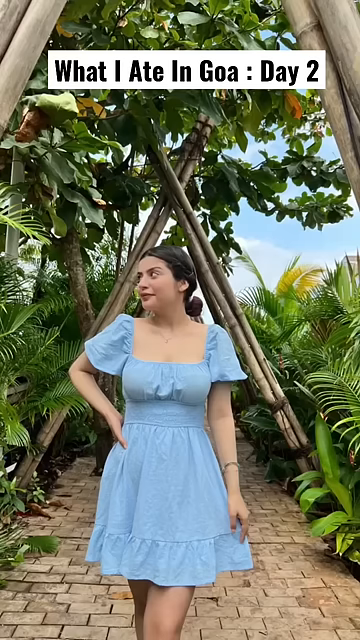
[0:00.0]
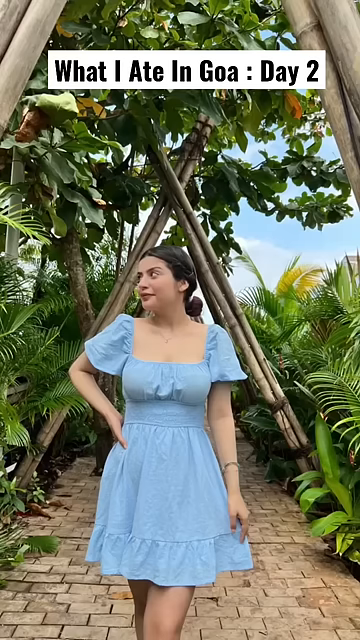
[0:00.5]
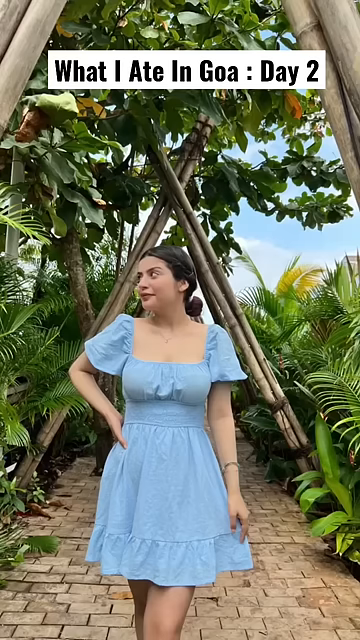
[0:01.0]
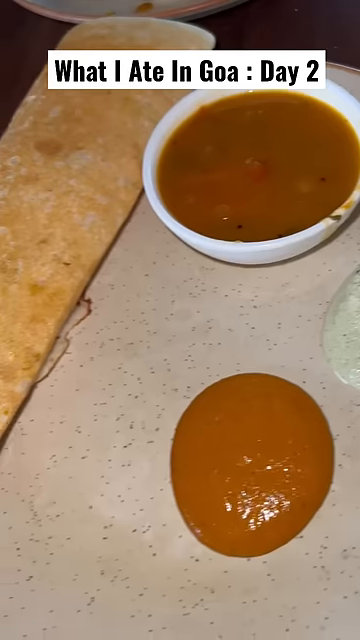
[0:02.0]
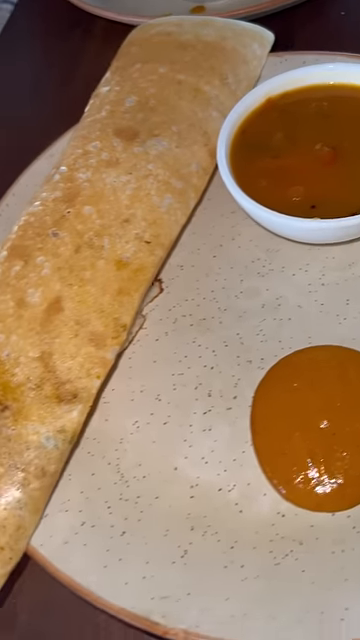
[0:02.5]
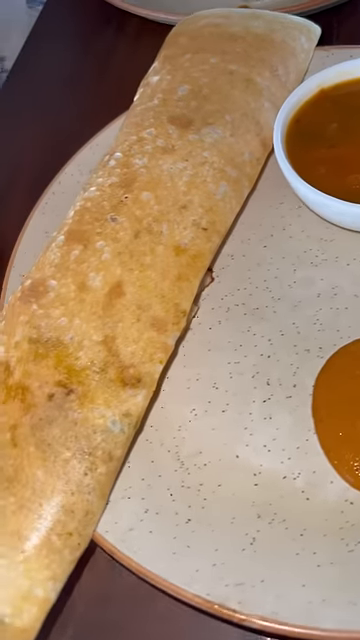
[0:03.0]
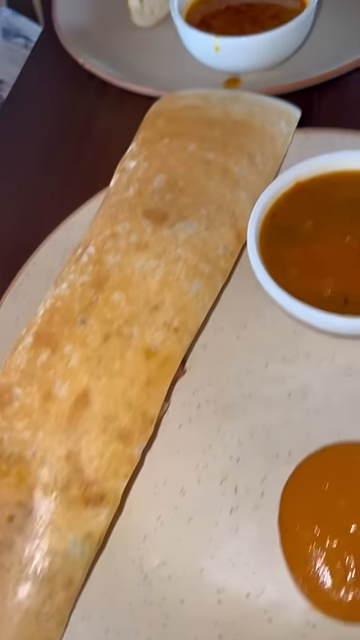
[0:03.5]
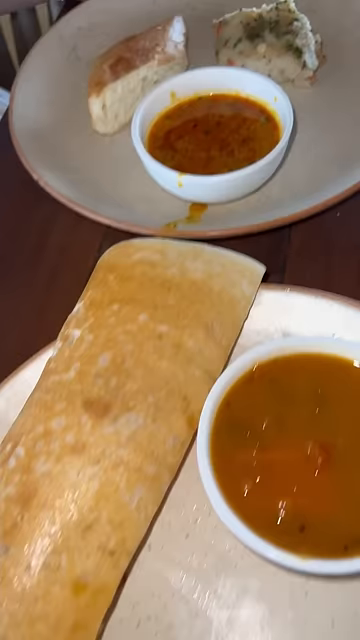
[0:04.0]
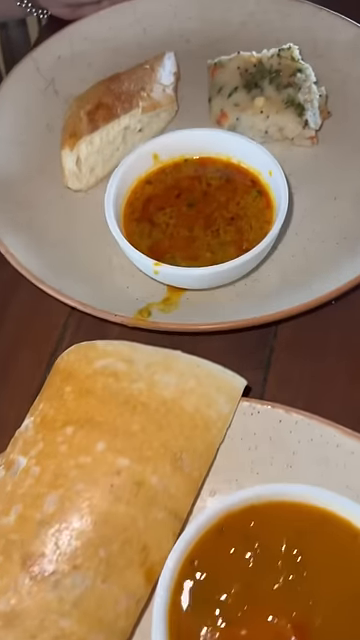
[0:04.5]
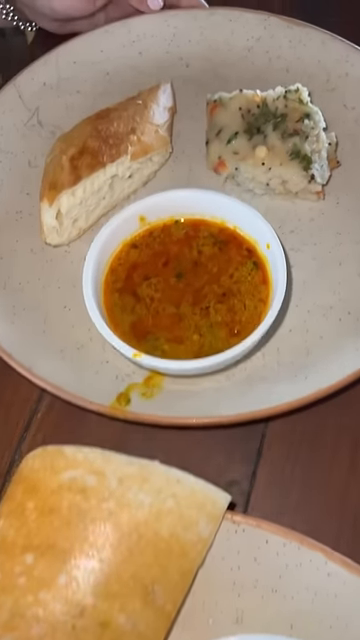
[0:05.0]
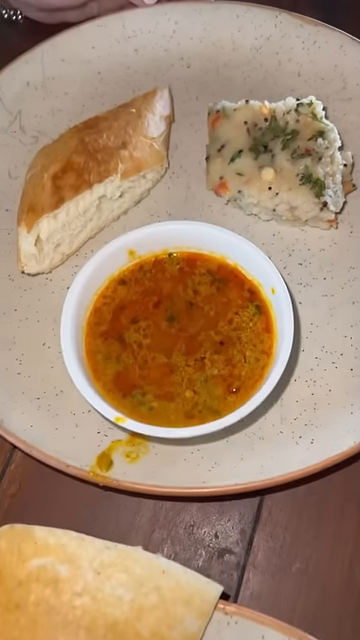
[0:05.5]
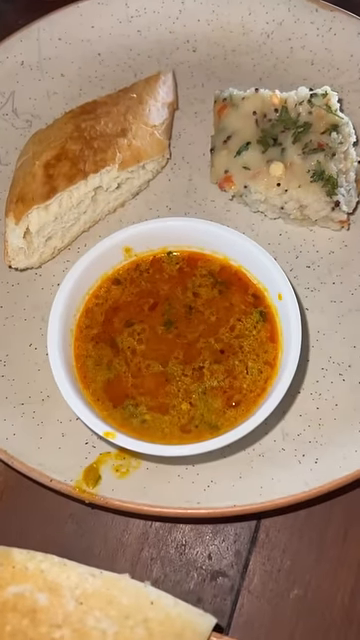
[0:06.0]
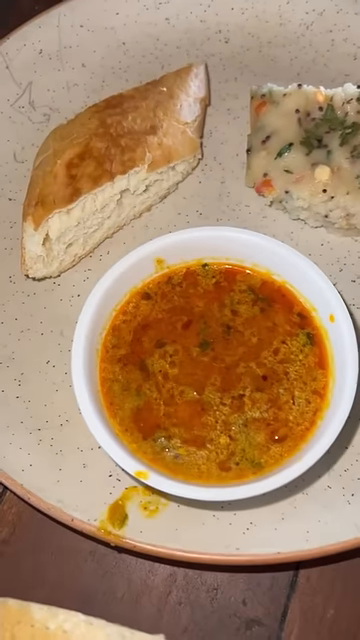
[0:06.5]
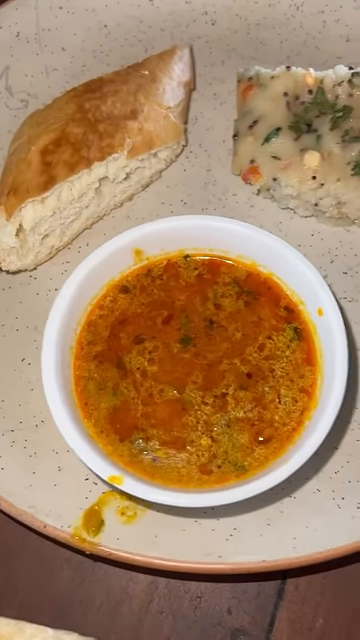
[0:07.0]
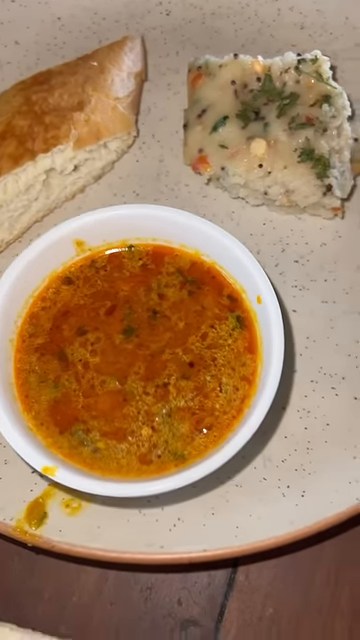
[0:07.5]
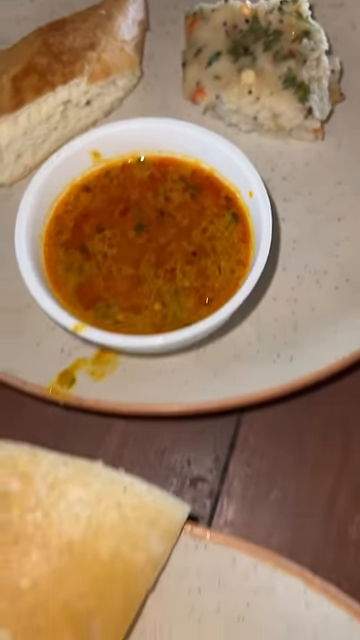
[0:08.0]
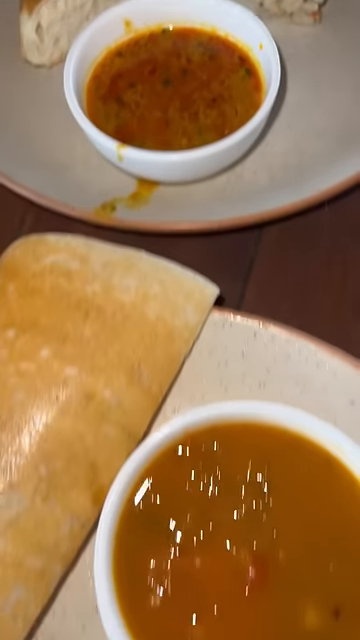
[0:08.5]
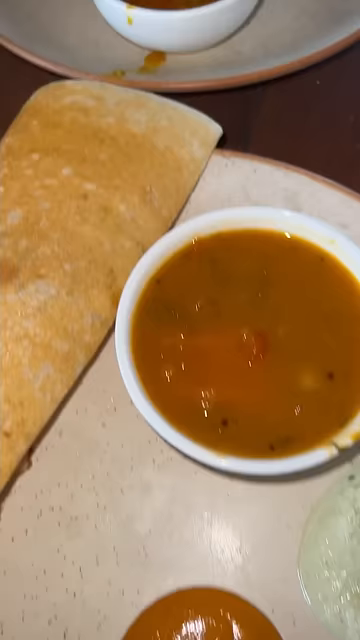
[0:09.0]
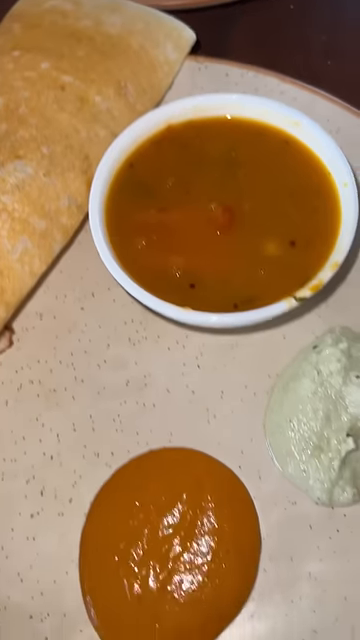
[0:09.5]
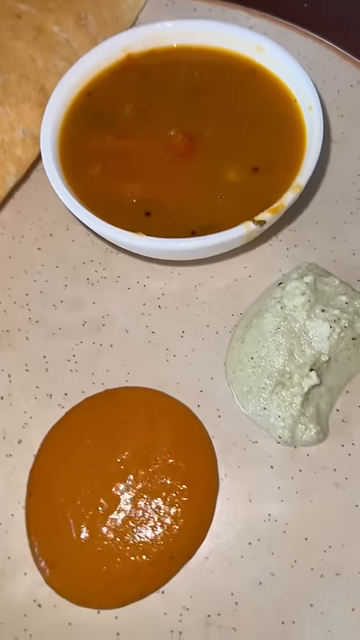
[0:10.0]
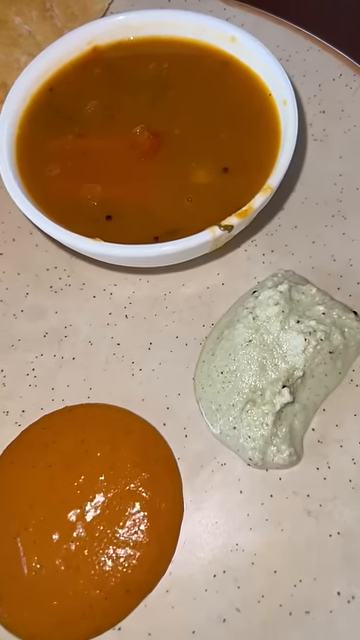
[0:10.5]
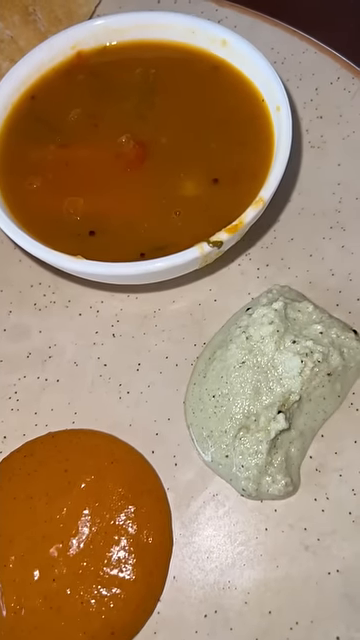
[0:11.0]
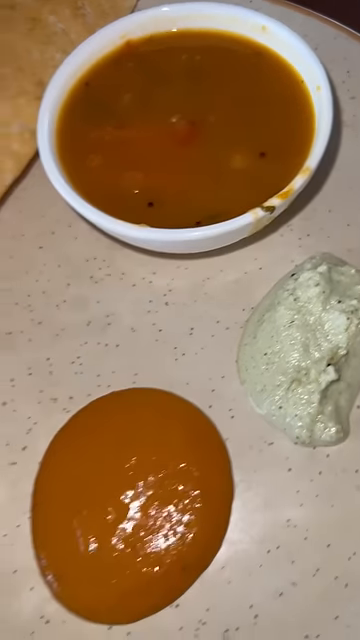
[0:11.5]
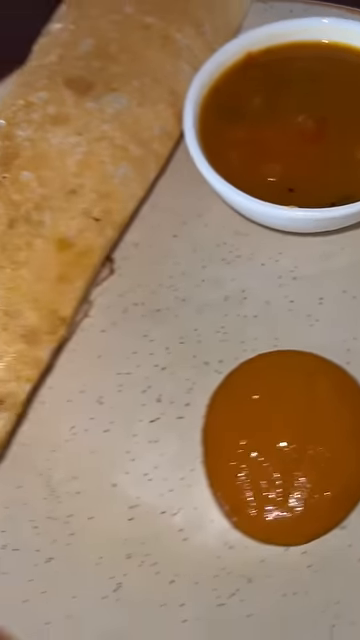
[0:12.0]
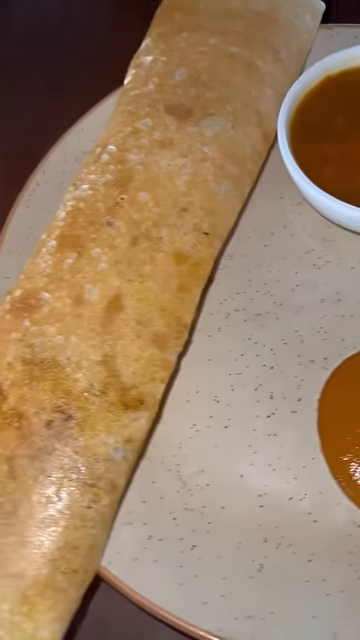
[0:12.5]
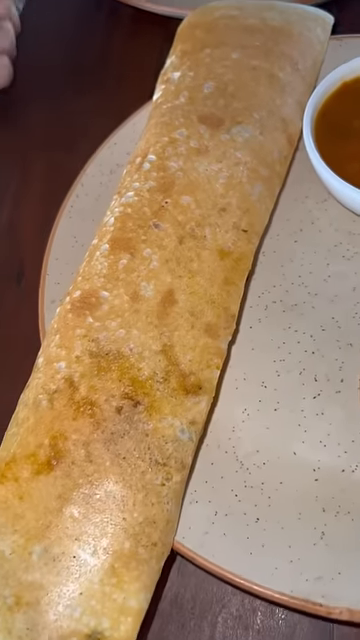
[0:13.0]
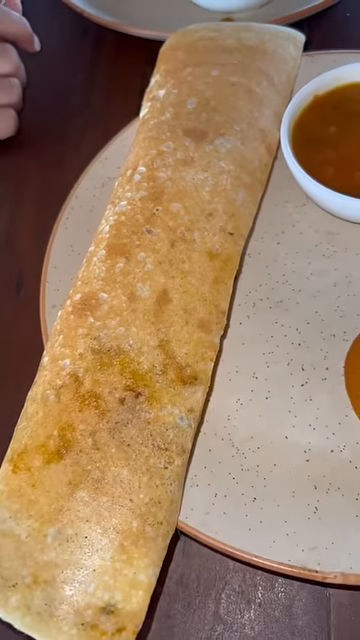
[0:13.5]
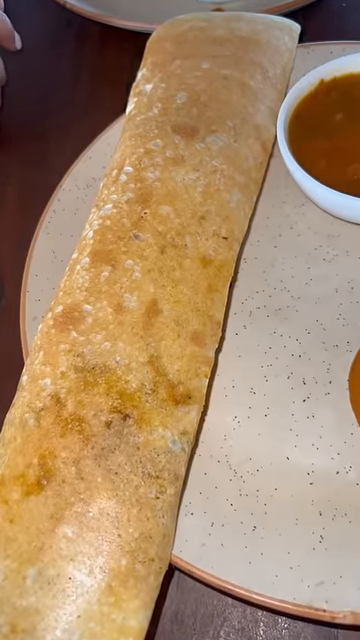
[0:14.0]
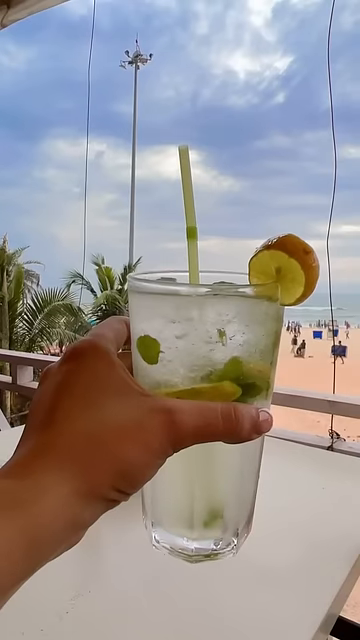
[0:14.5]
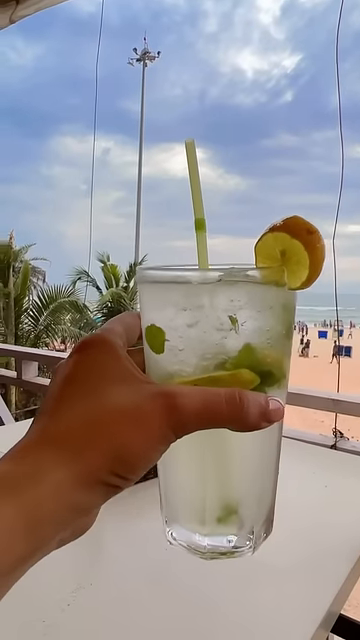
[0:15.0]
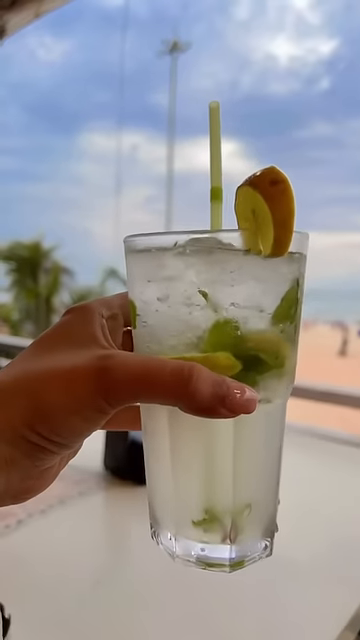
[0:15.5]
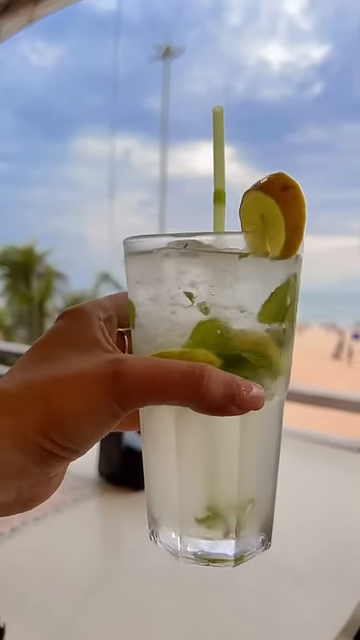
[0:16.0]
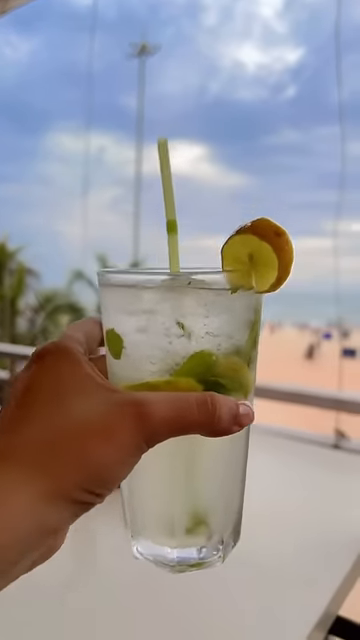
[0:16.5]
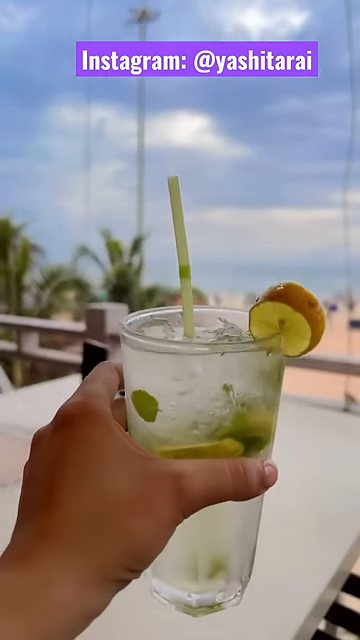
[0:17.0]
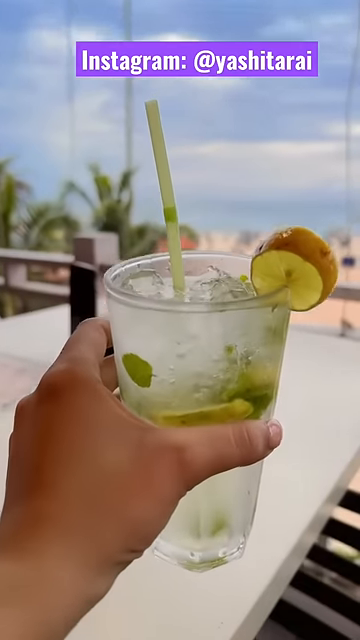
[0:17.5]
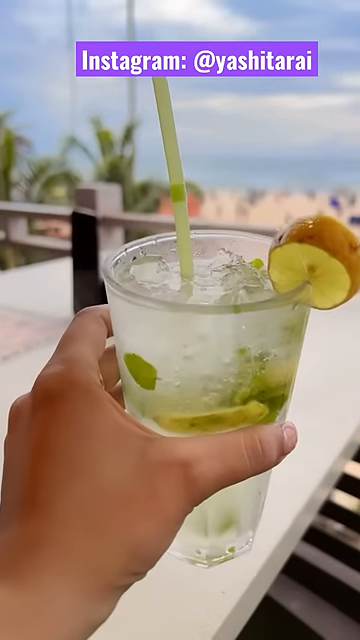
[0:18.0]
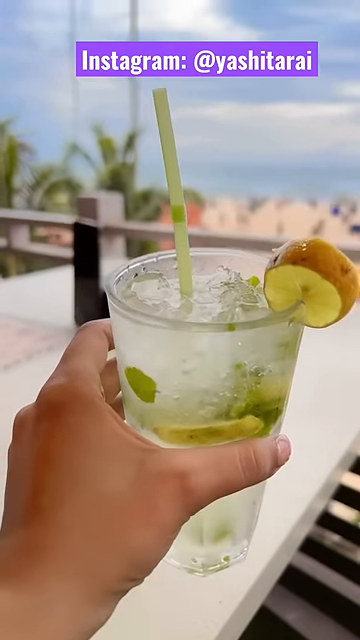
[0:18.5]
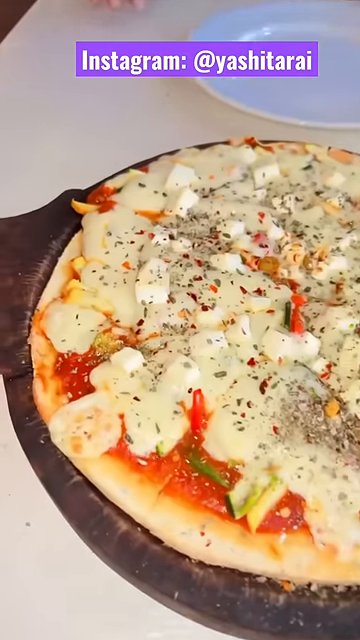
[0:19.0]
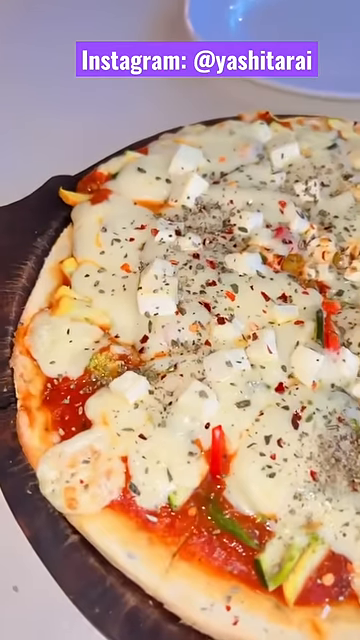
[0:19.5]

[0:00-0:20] A person shows several food items on a table that they begin to eat for the day, including breadstick-like items with dipping sauces, some vegetables, and other green dipping sauces on the plate; there are two plates with the breadstick-type items and dips. The person then holds up a glass filled with a beverage that has a green tint, looking out at the beach beyond them. A brief shot follows of what appears to be a white pizza, most likely the next item they would eat.